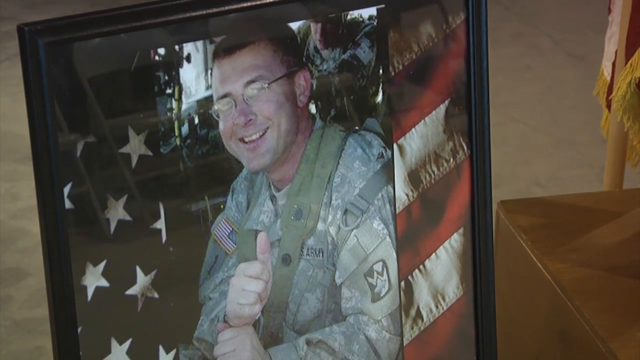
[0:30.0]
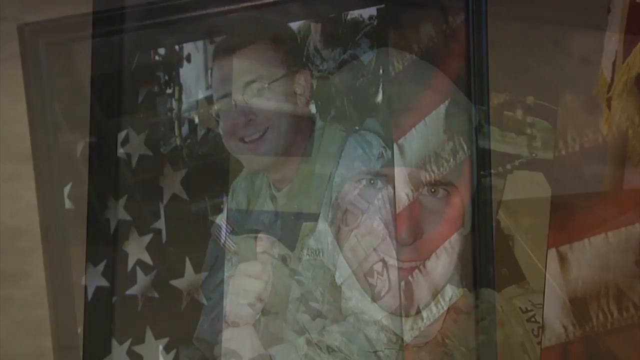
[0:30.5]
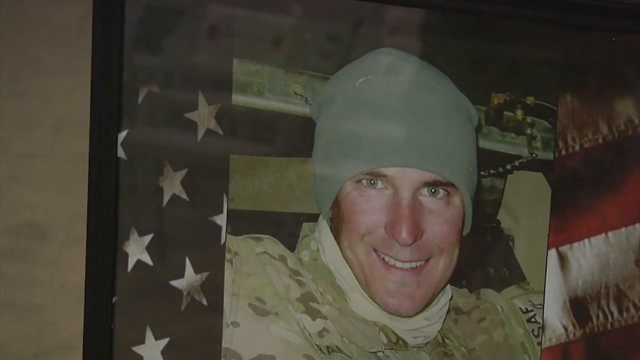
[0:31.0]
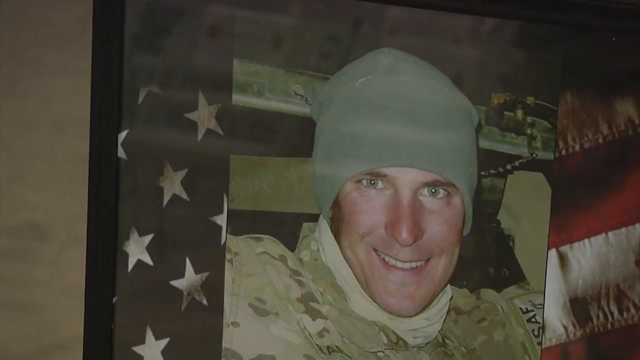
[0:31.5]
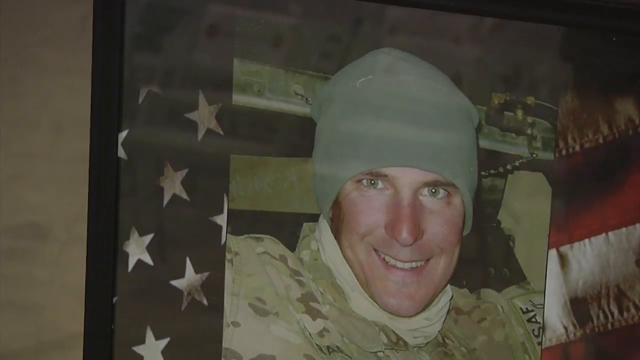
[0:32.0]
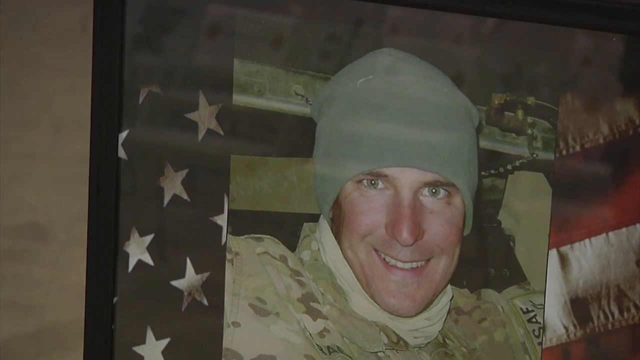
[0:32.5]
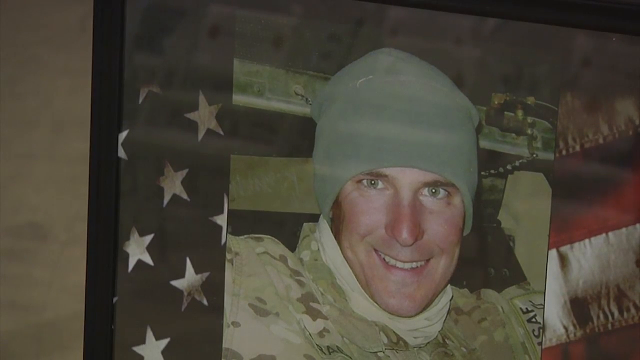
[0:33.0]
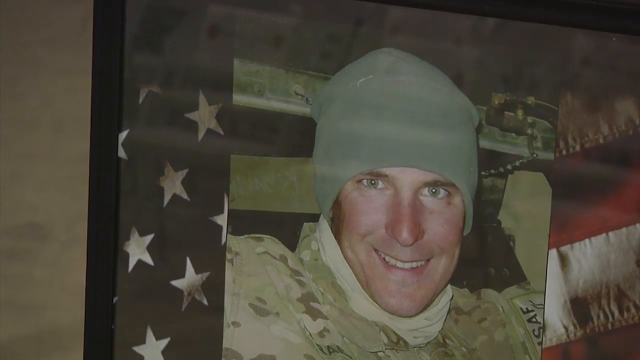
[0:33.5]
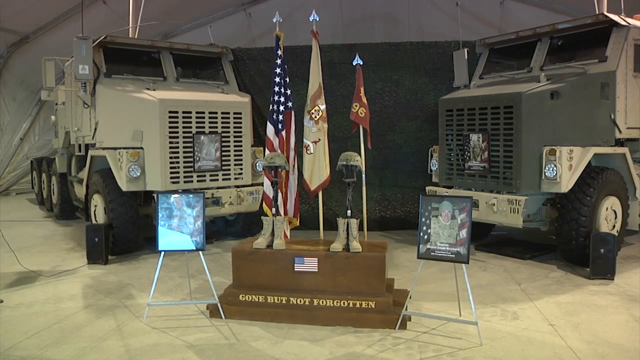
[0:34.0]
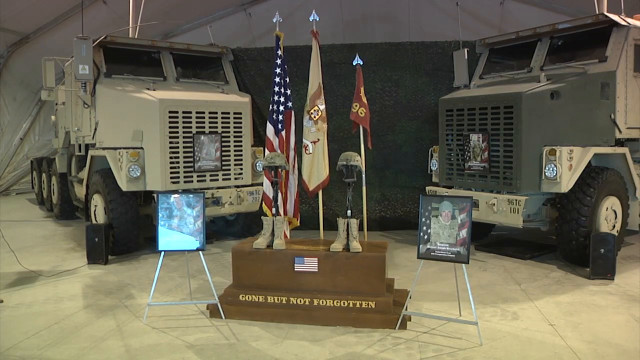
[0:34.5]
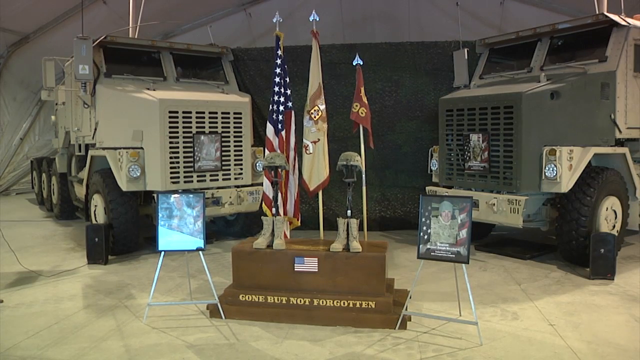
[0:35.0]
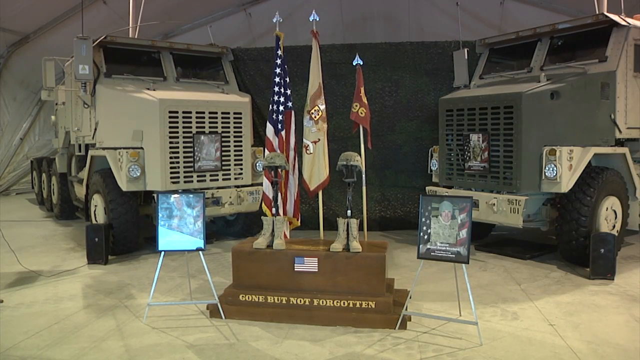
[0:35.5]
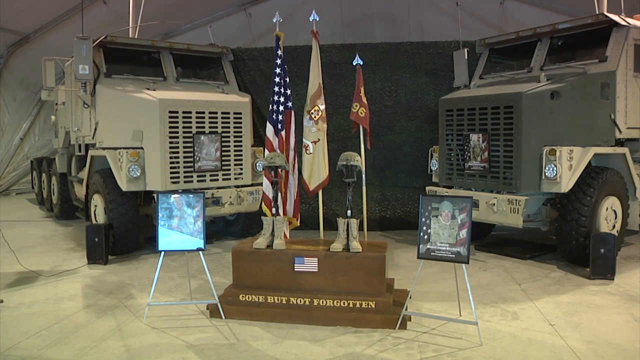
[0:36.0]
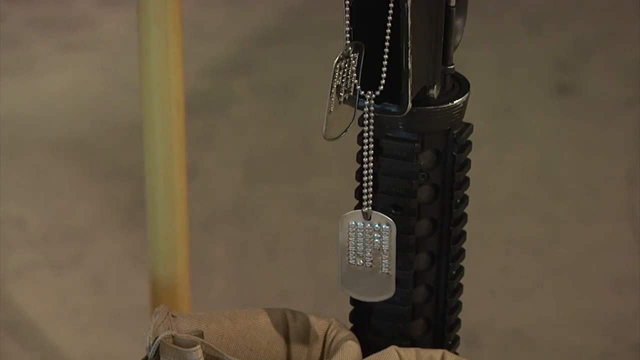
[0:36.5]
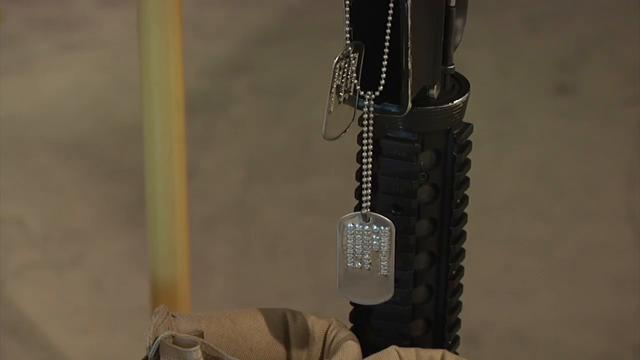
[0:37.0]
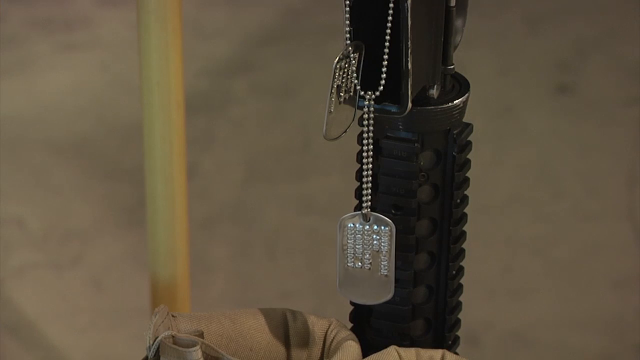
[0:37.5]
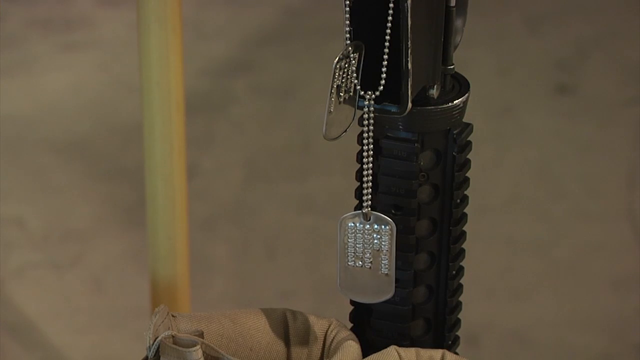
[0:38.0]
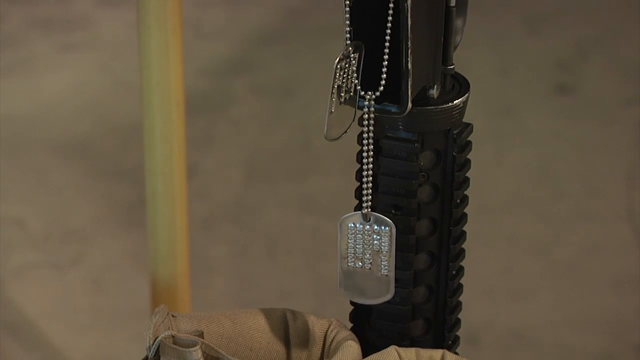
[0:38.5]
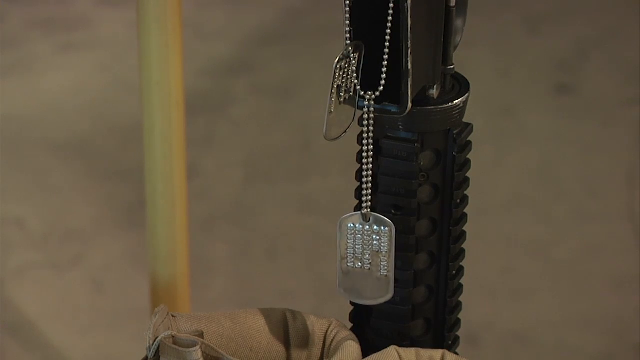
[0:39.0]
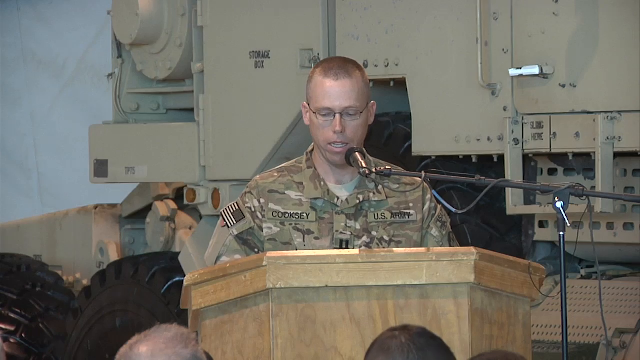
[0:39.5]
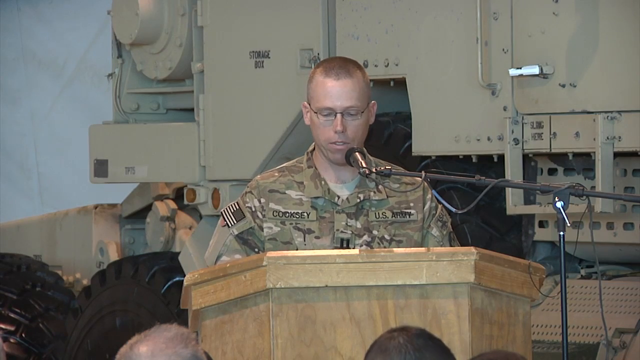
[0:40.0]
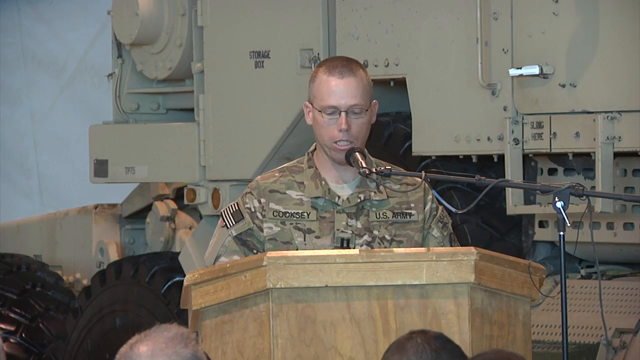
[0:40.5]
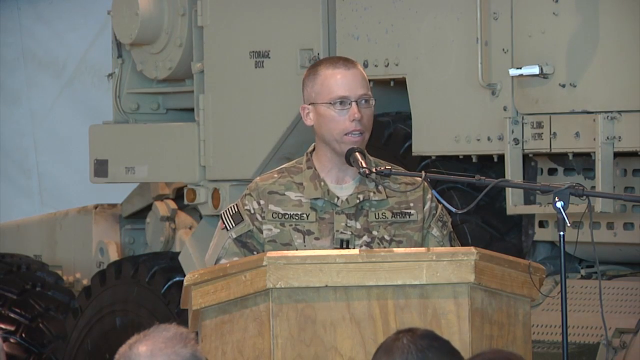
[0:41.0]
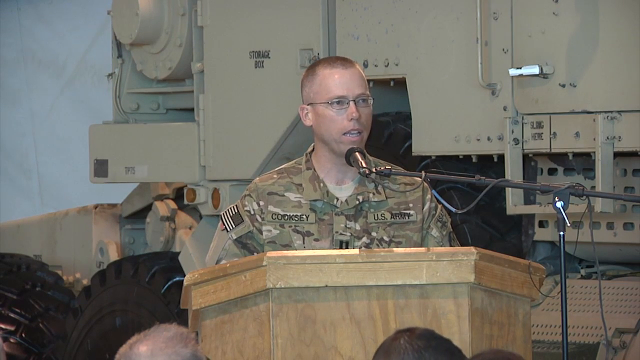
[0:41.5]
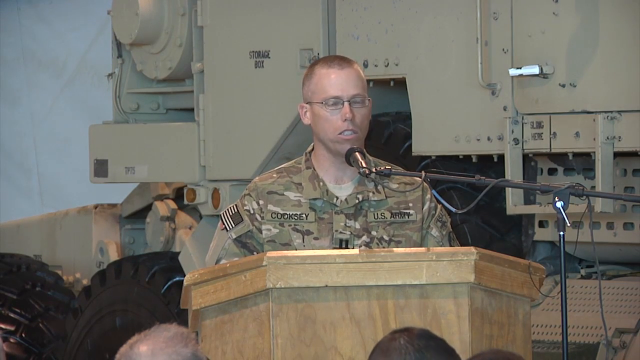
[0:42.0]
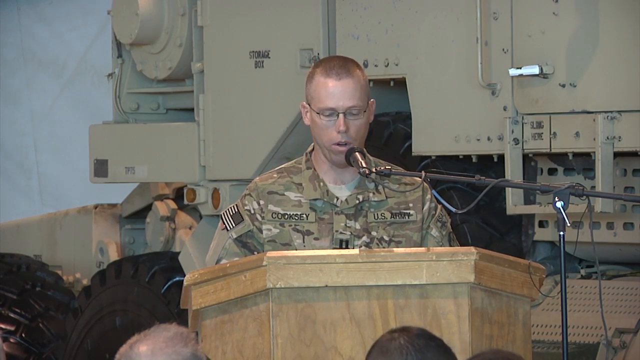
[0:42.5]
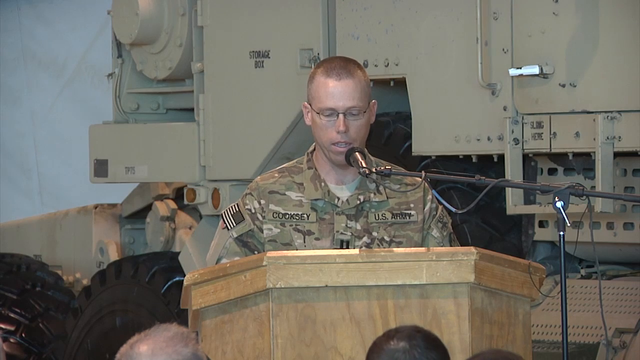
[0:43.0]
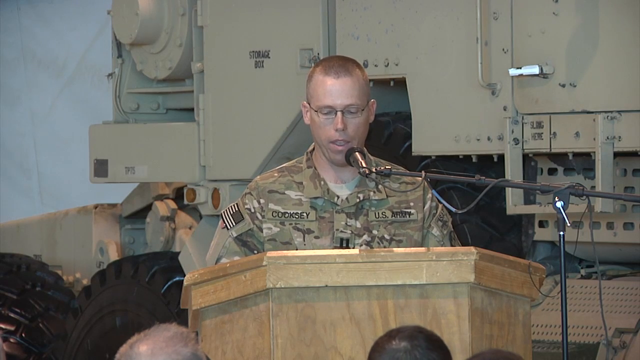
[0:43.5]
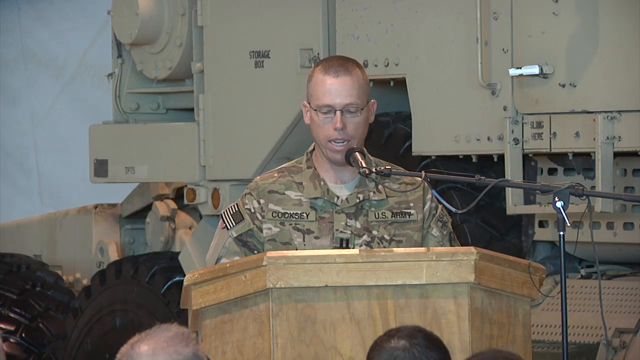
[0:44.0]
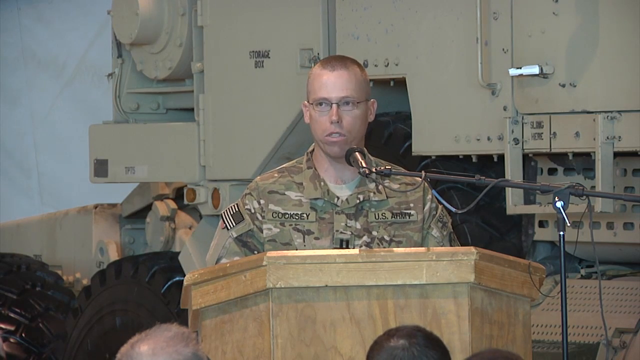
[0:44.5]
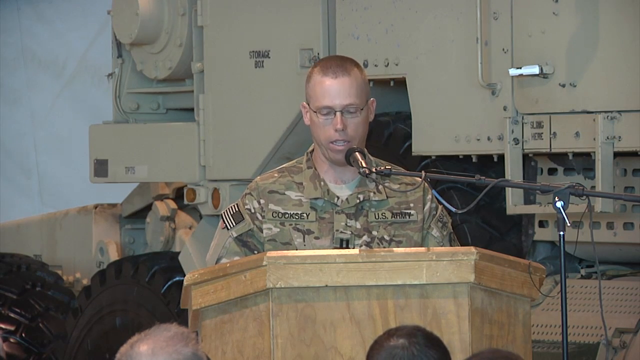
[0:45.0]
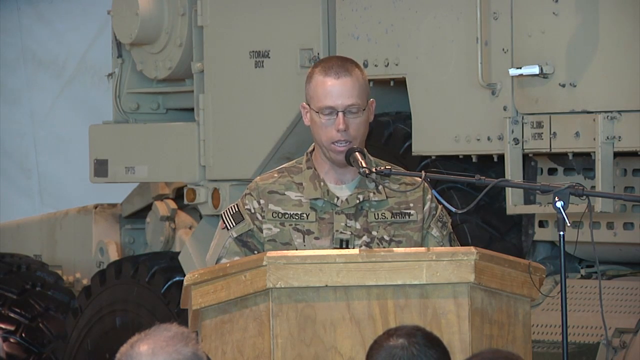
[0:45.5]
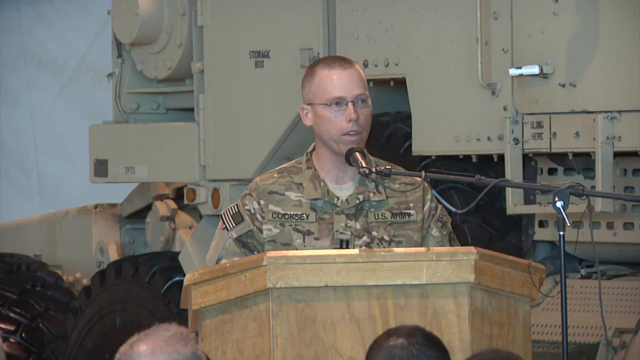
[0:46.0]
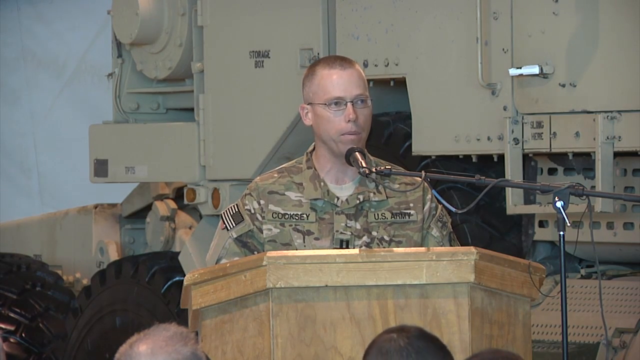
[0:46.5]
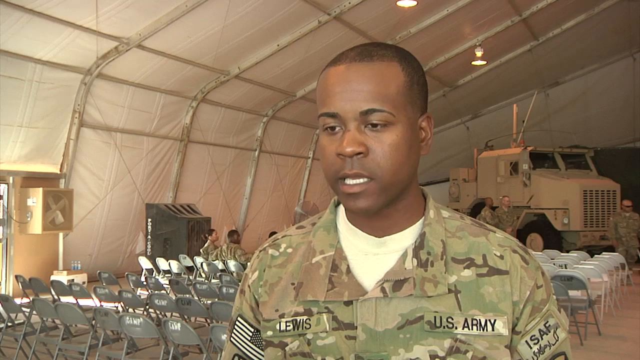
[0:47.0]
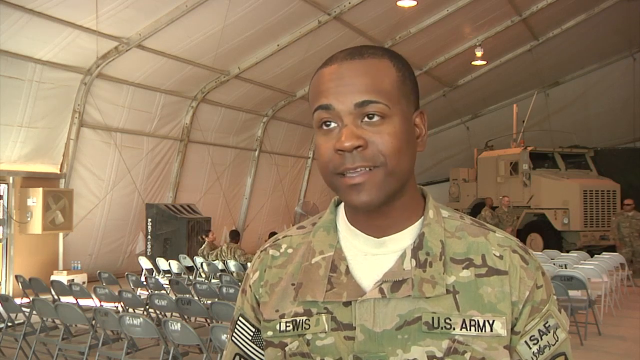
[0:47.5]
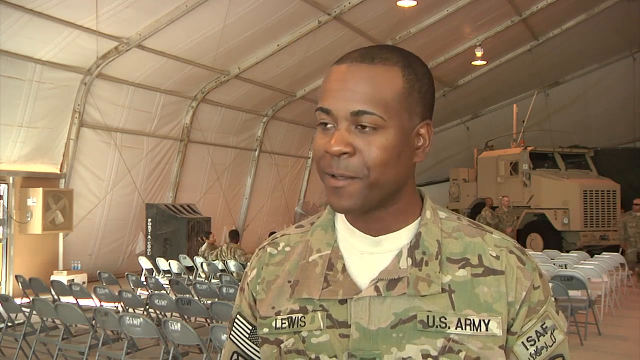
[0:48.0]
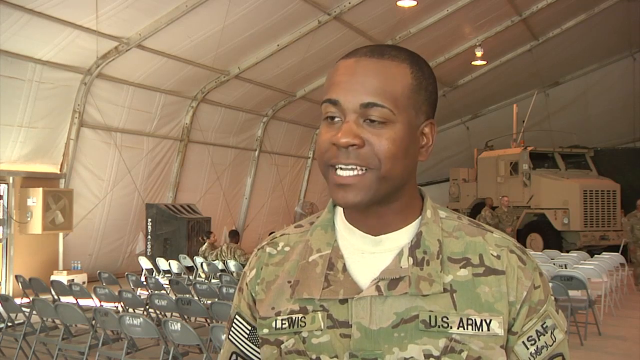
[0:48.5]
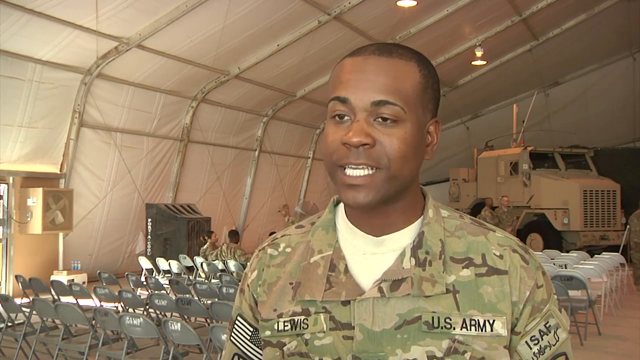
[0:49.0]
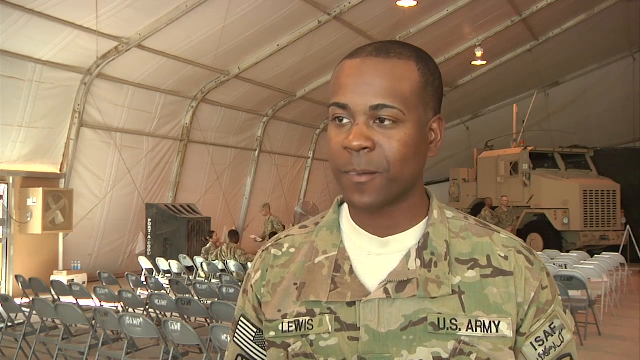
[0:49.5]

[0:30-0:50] The photograph shows a smiling military person wearing glasses, a white man with short cropped brown hair in a camouflage suit; the photograph is laid on top of an American flag. Next is a photograph of another military man wearing a green knitted cap, also smiling, a white man with blue eyes; this photo is also laying on the American flag. Then the video switches to three flags on a wooden stand, with two military vehicles behind them. Next is what may be a wooden spindle, possibly the leg of a piece of furniture, with a dog tag on a chain wrapped around it; the chain is wrapped around the spindle and the dog tag is hanging down. The video returns to the man standing at the podium speaking; the equipment behind him seems to be something like a big tank, and his head bobs up and down as he speaks, looking apparently down at his notes and then out to the audience. Then a Black military man appears in a camouflage uniform with a white T-shirt and short cropped black hair, talking with a decent level of energy.